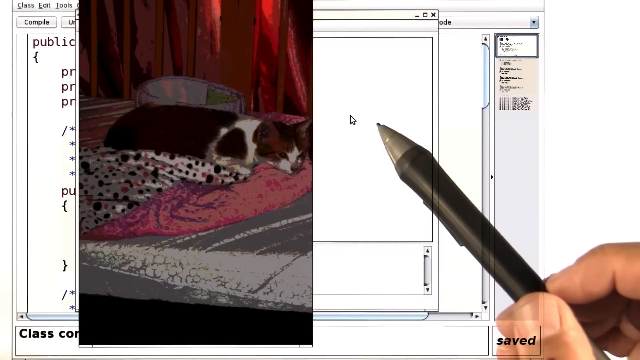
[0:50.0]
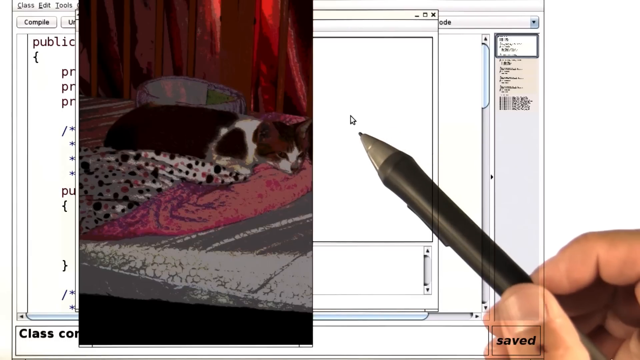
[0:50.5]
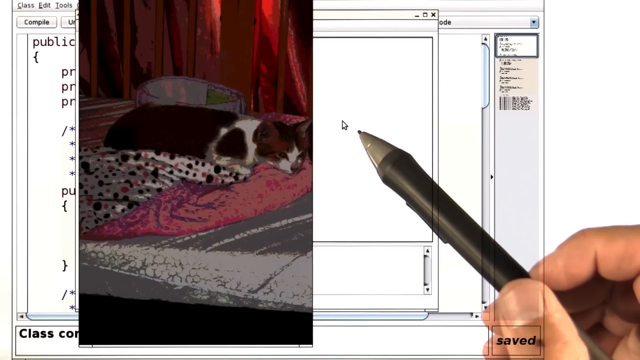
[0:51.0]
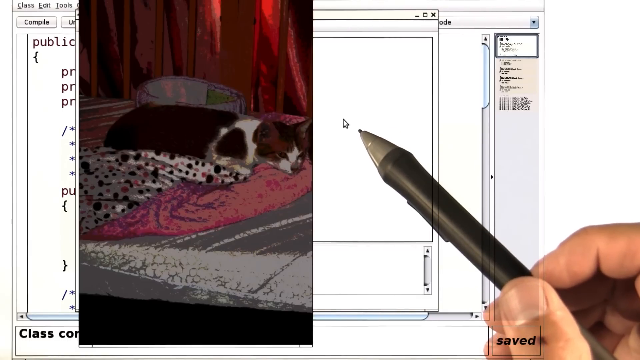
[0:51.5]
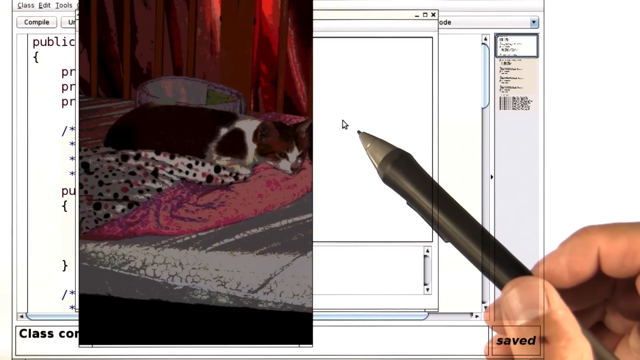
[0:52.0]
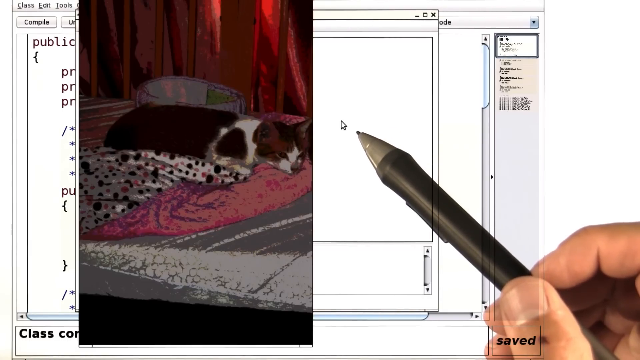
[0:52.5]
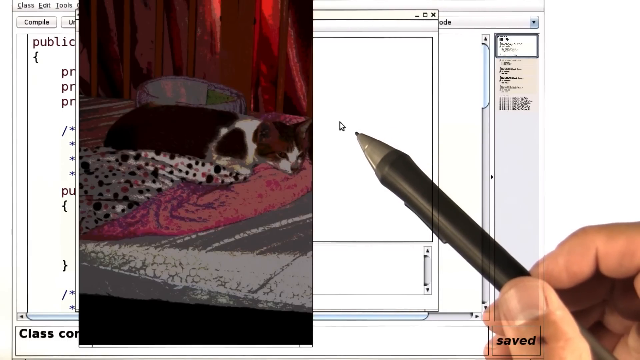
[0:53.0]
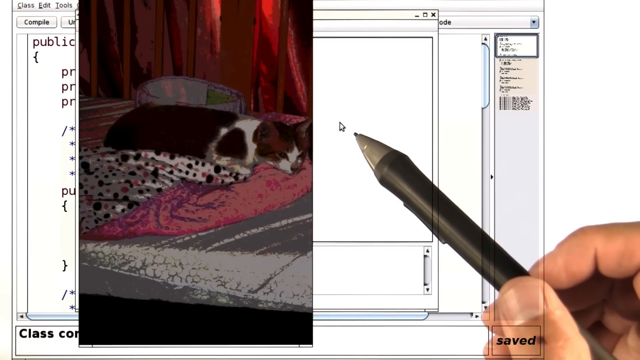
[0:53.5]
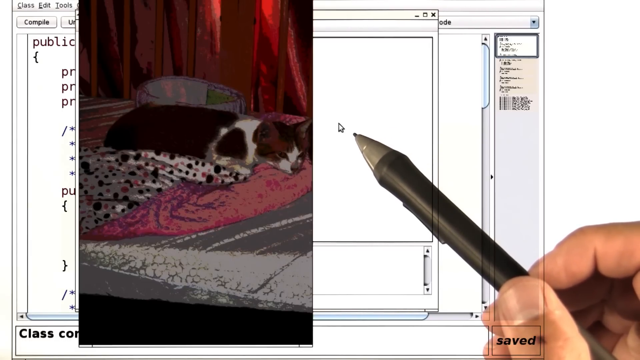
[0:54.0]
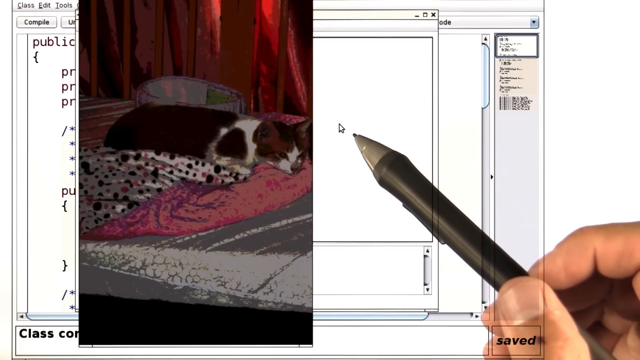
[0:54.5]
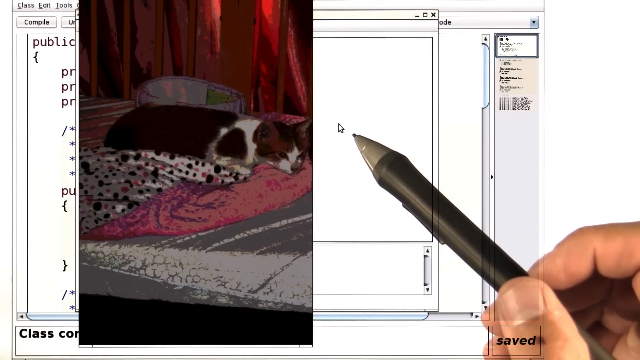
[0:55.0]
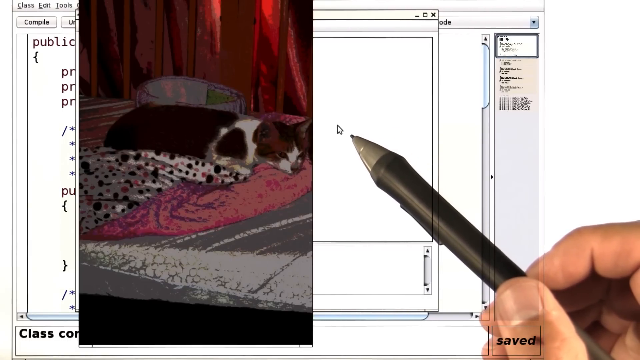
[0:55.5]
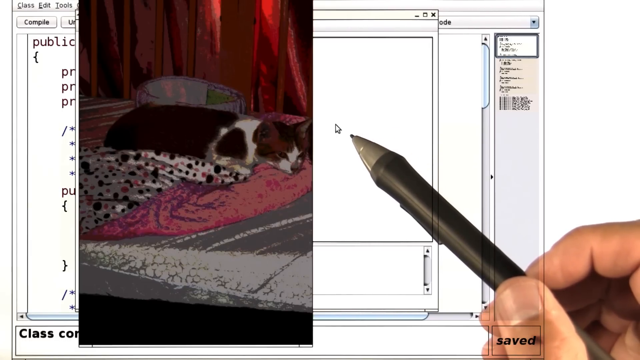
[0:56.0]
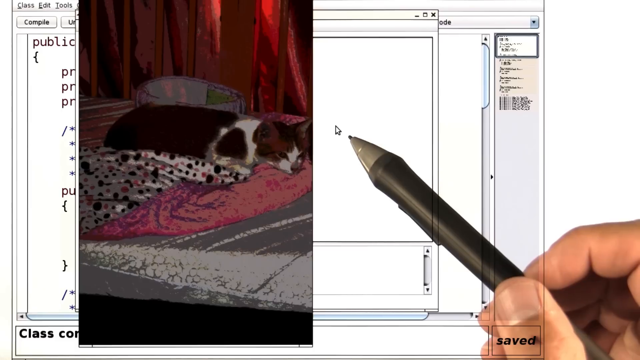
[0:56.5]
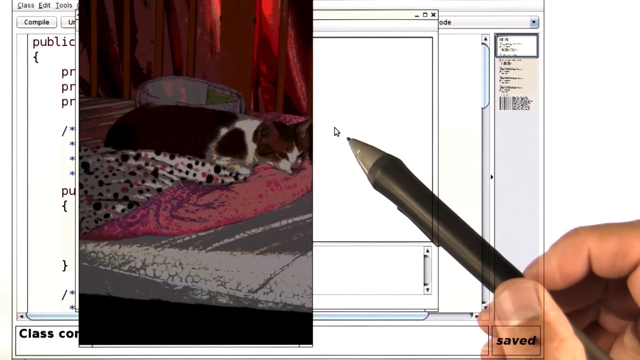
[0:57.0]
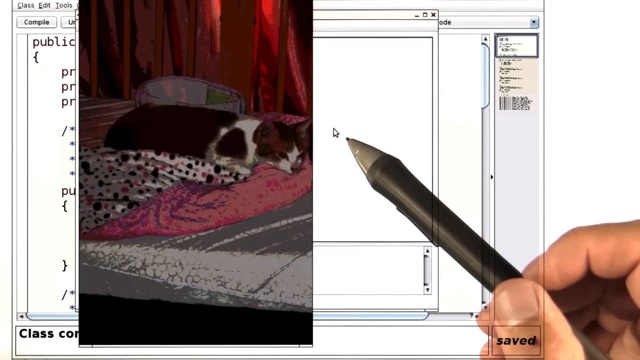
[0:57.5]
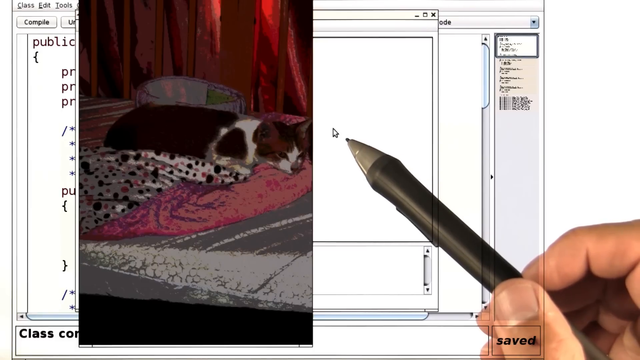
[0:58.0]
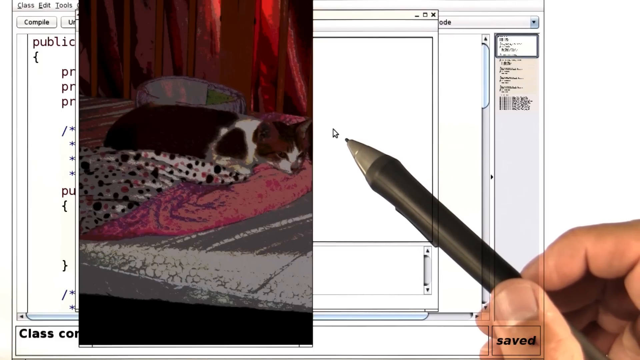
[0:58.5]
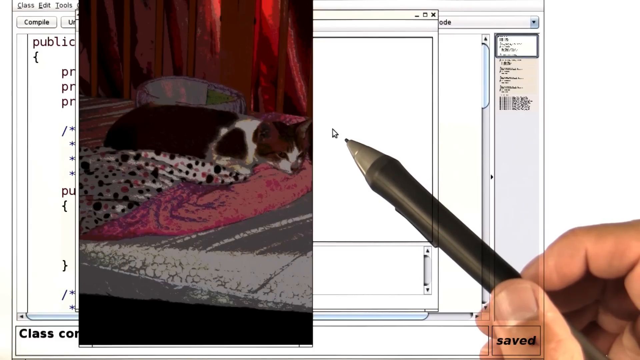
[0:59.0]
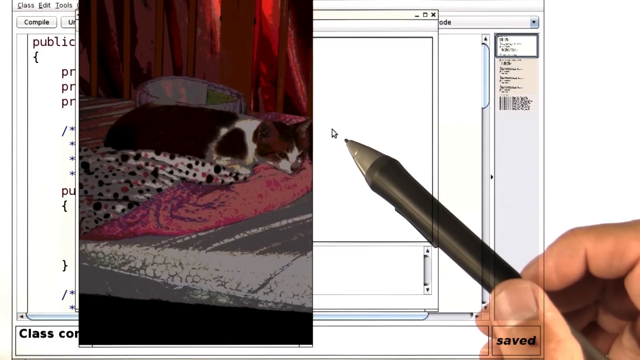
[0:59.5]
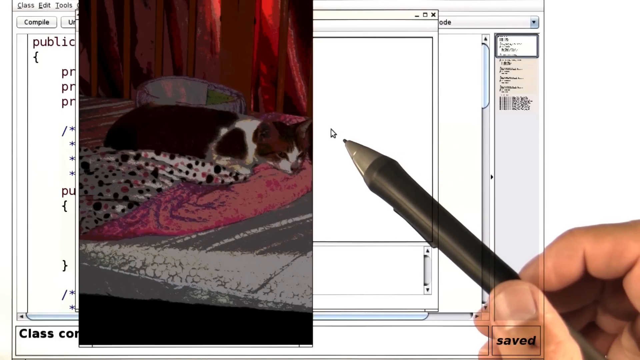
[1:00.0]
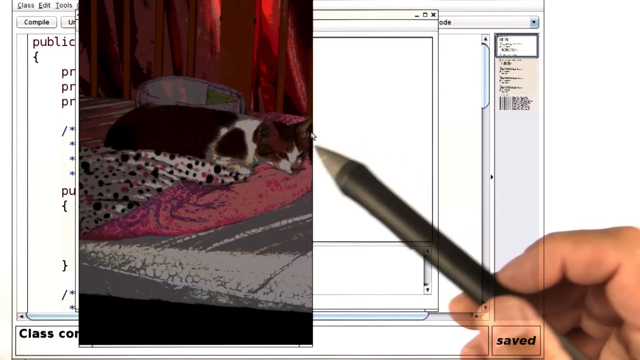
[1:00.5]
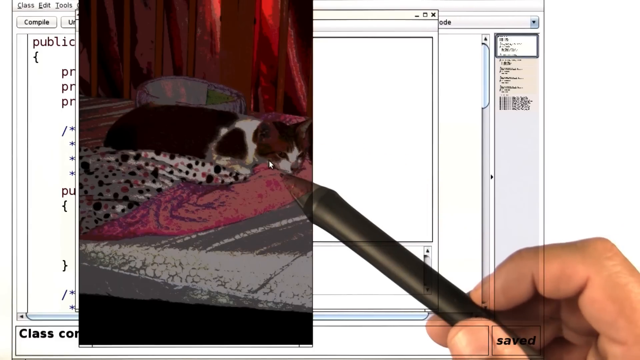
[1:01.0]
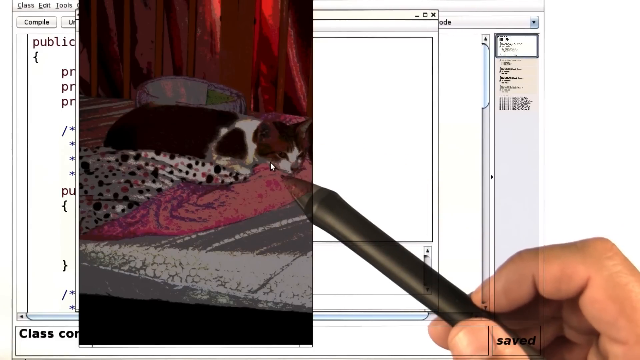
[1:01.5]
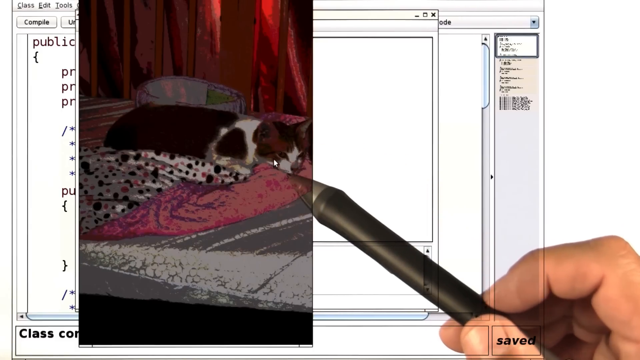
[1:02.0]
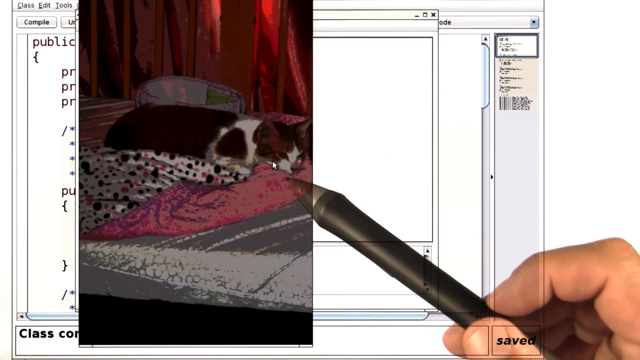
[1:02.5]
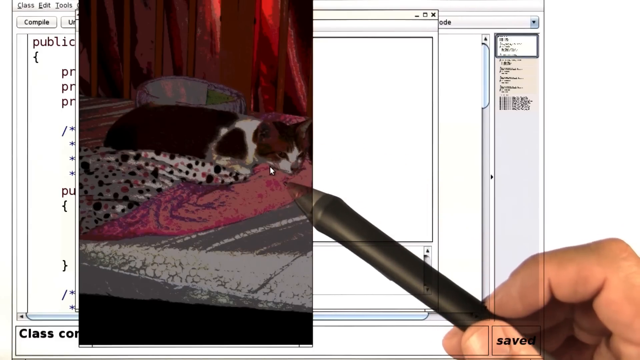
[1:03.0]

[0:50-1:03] The picture of Eliza the cat remains on the screen, with Eliza still lying on the pink bedding and what looks to be pink and black polka dot bedding. The person's hand is held mid-air with the pointer, making no movements, and nothing changes with the Eliza picture's position or anything else.